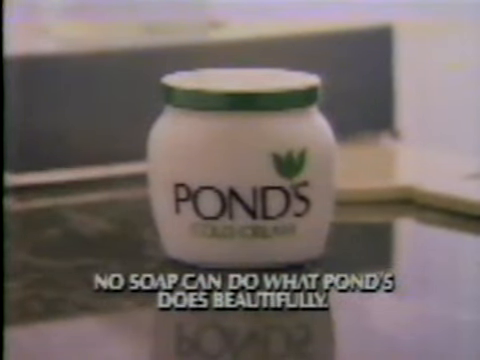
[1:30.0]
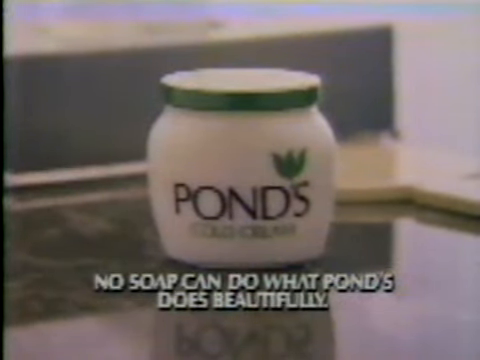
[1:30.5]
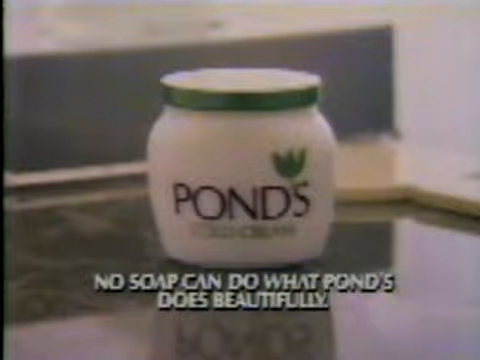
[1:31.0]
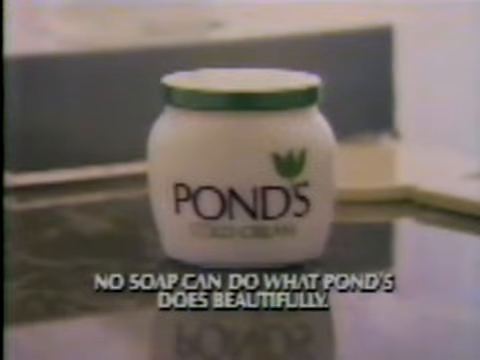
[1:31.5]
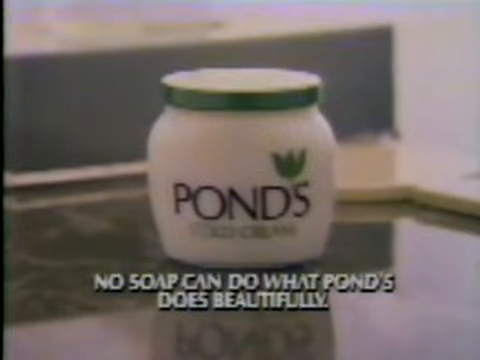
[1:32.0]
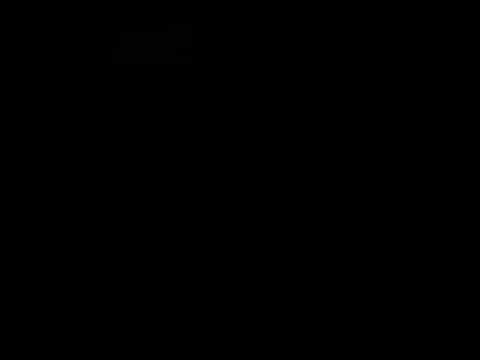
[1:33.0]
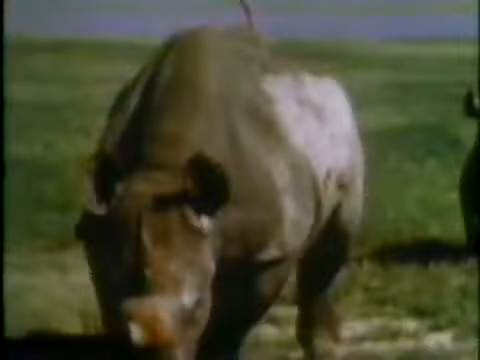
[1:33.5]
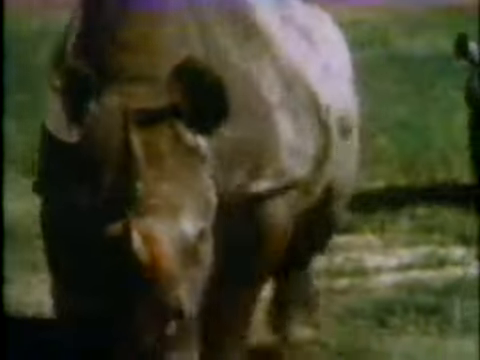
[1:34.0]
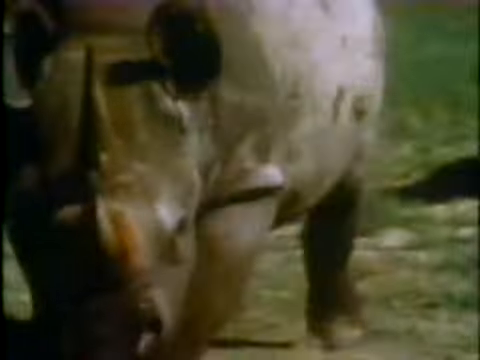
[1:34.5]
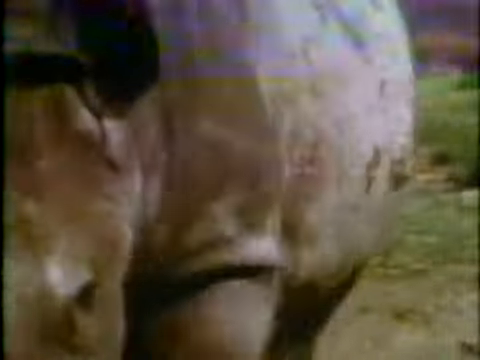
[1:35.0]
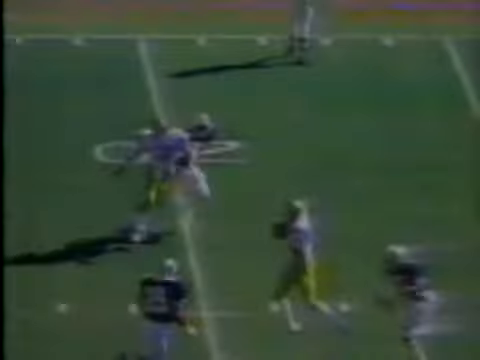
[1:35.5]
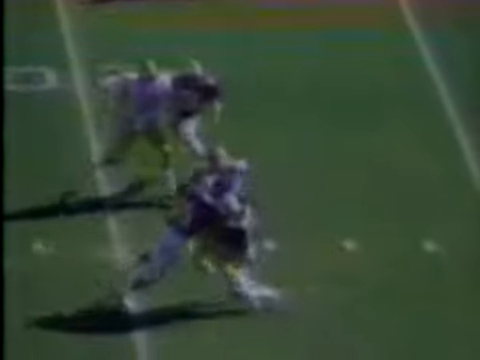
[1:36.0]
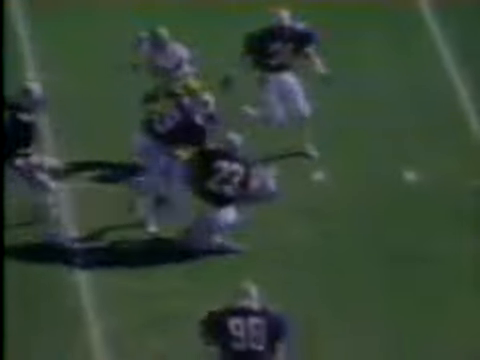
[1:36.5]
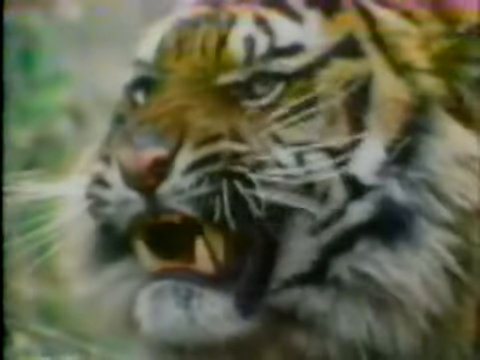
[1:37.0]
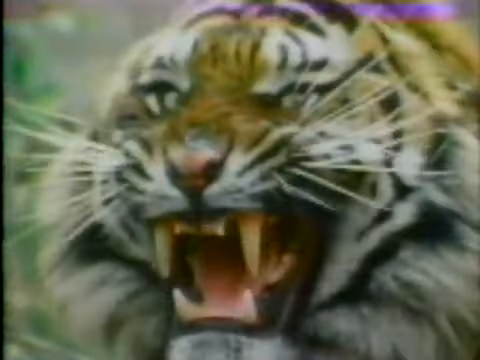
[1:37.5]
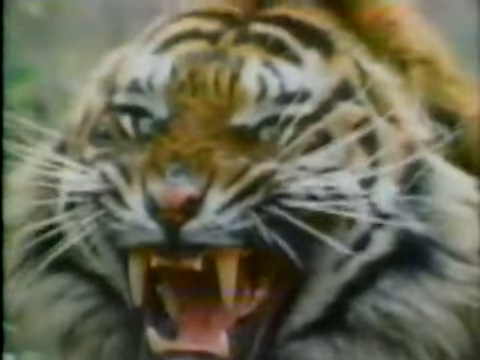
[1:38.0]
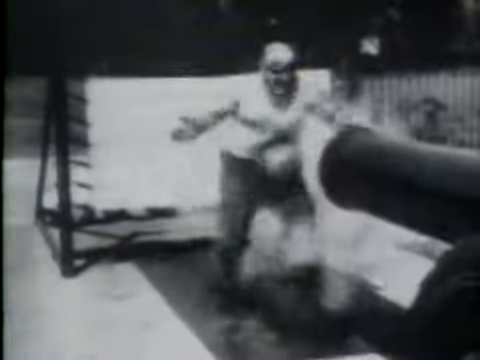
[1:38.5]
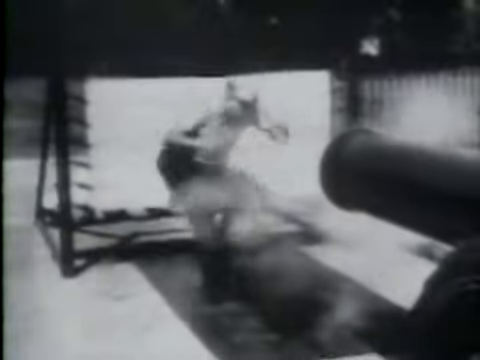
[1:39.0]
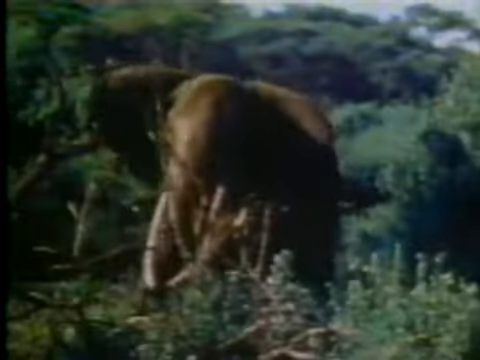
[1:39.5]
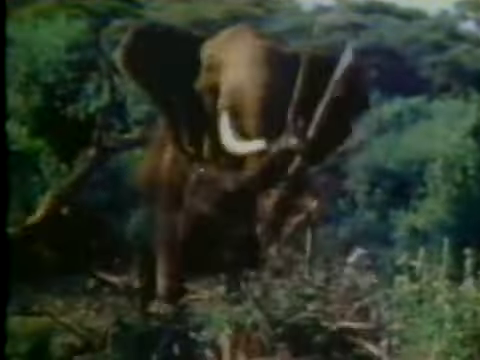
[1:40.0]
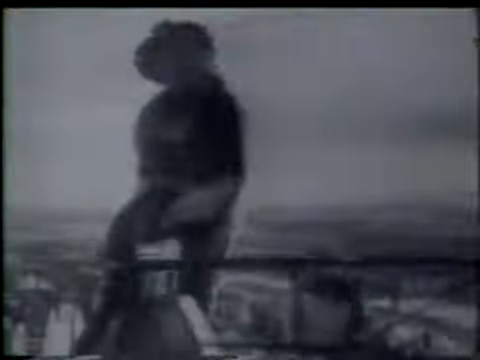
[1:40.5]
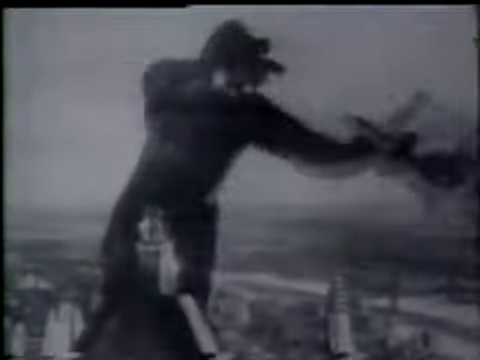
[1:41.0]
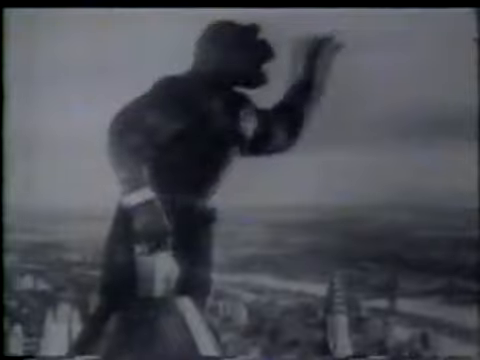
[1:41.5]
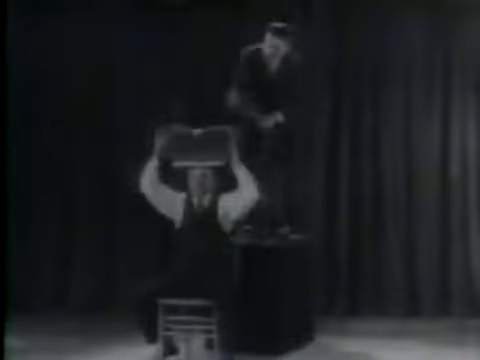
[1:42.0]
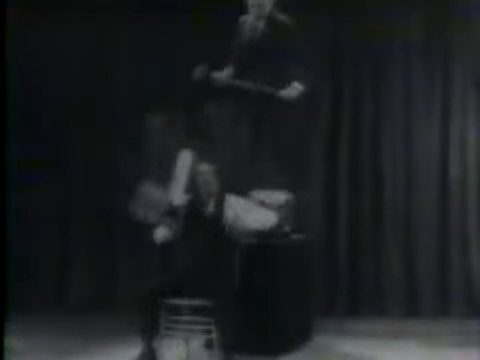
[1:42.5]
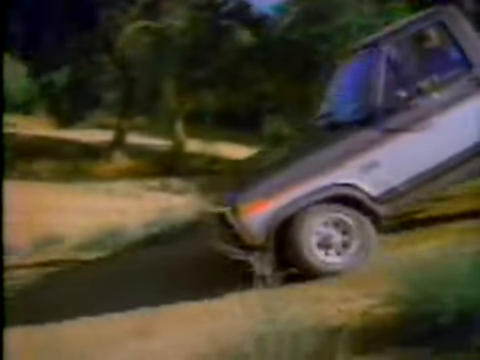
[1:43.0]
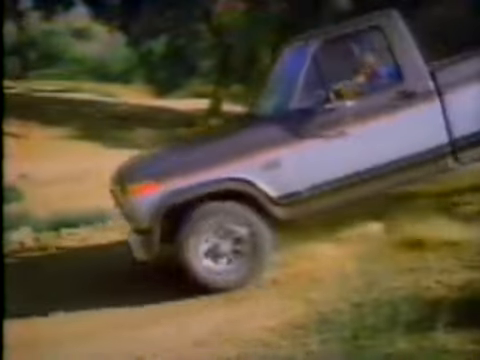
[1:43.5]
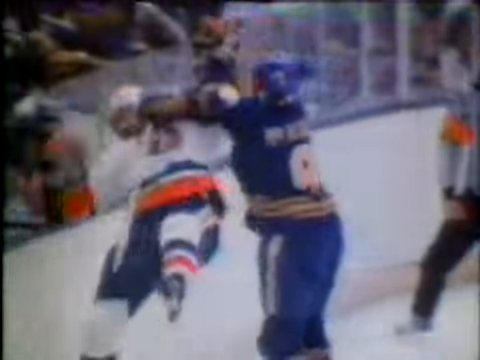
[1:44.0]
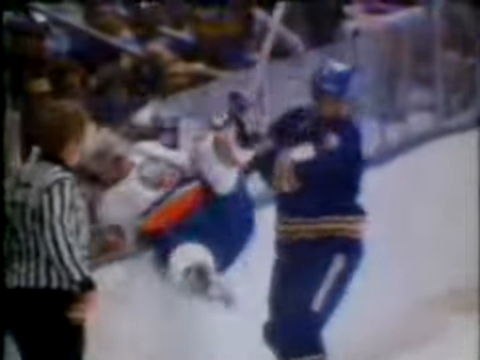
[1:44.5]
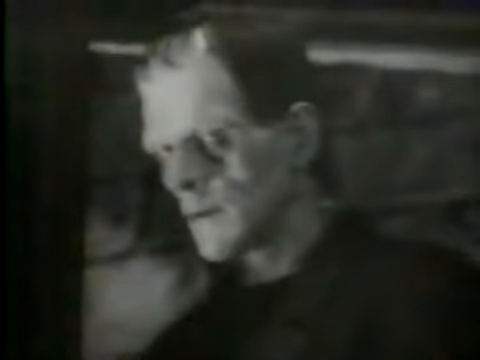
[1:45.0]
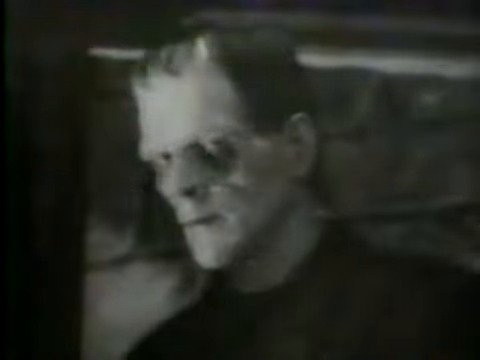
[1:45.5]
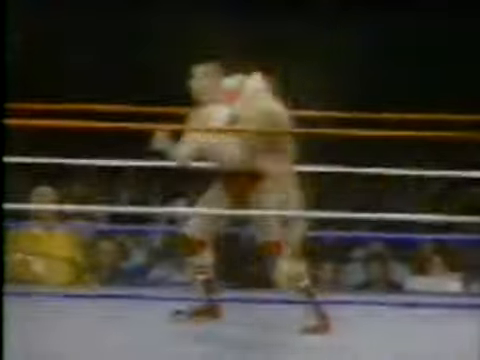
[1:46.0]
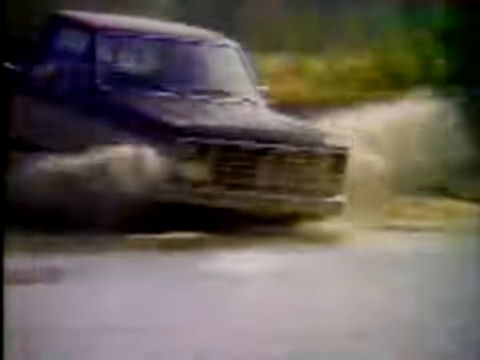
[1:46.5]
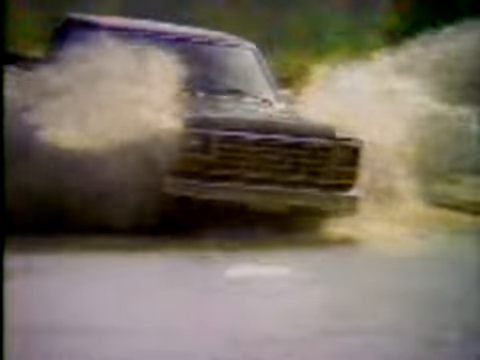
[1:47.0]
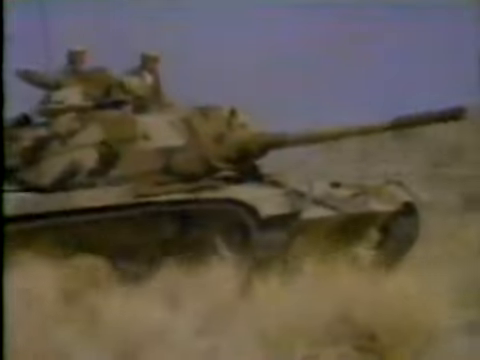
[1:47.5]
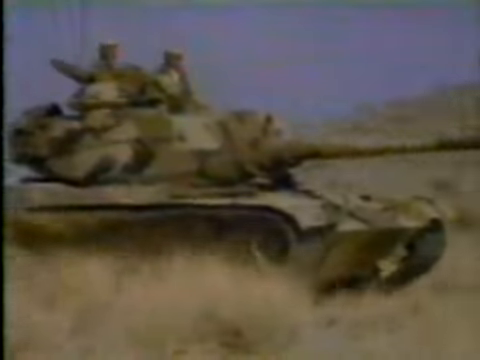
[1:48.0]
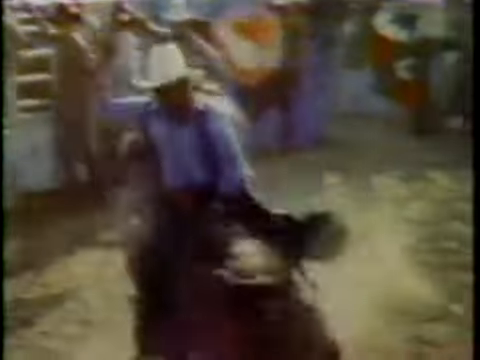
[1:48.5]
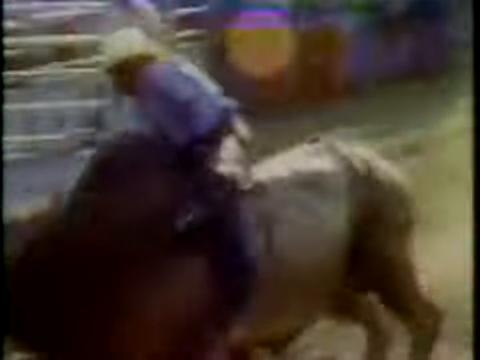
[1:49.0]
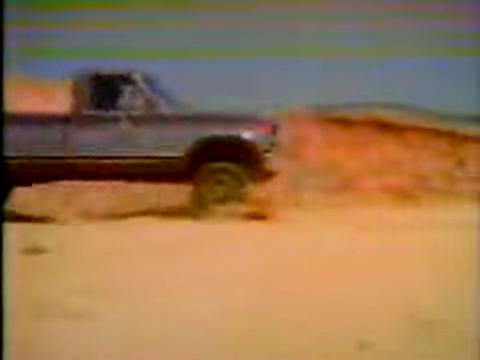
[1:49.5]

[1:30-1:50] The Pond's product is shown with the text at the bottom. Then a rhino runs toward the camera, followed by a rugby match on a field, then a tiger. A series of videos of sports cars running follows.